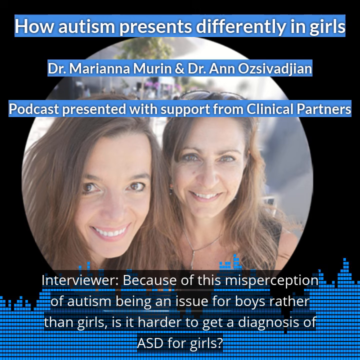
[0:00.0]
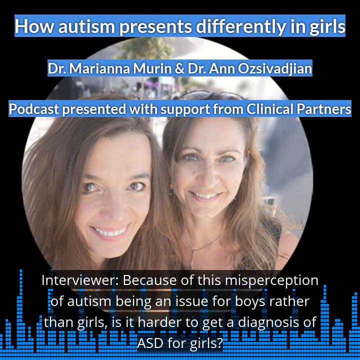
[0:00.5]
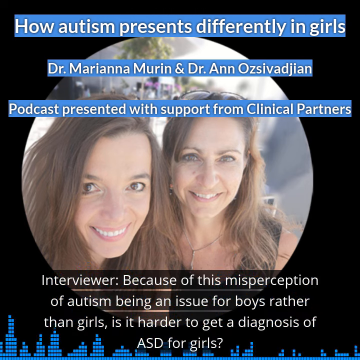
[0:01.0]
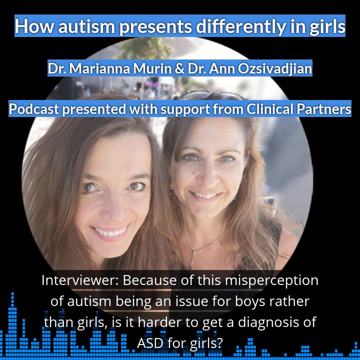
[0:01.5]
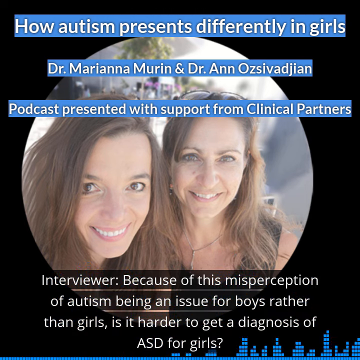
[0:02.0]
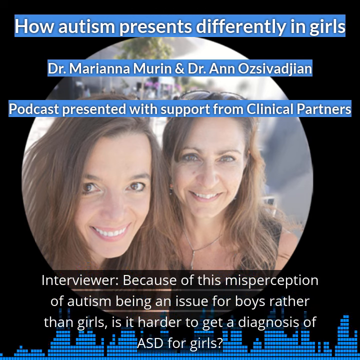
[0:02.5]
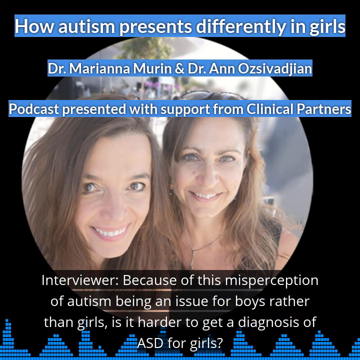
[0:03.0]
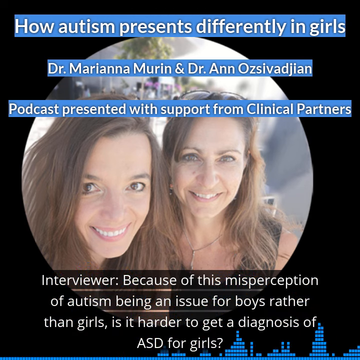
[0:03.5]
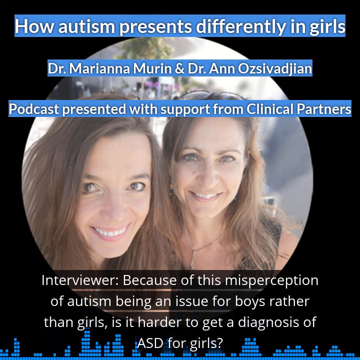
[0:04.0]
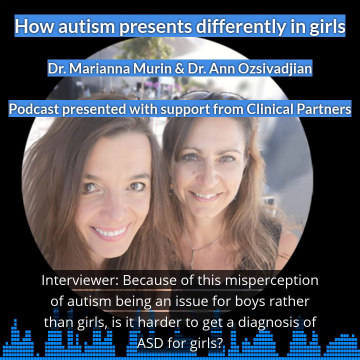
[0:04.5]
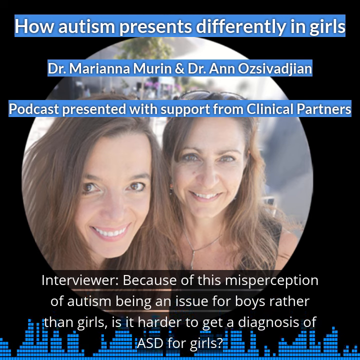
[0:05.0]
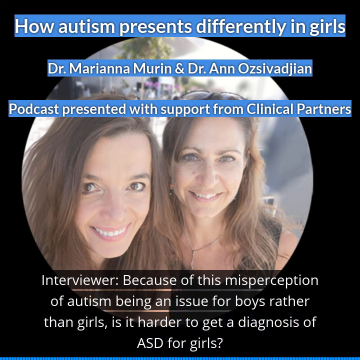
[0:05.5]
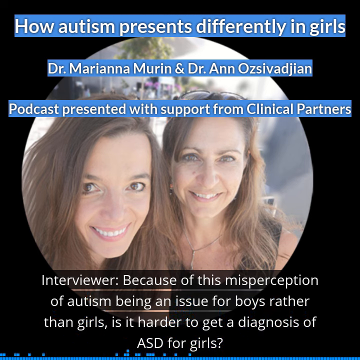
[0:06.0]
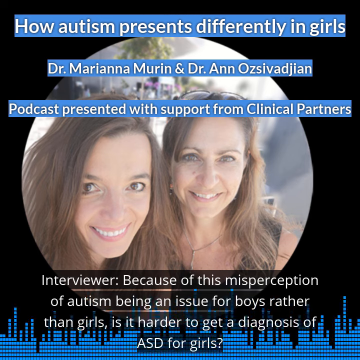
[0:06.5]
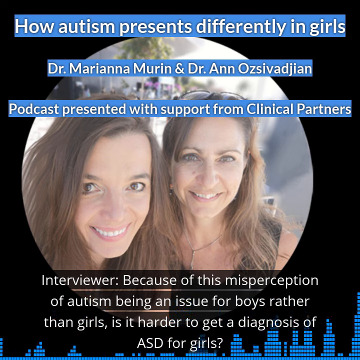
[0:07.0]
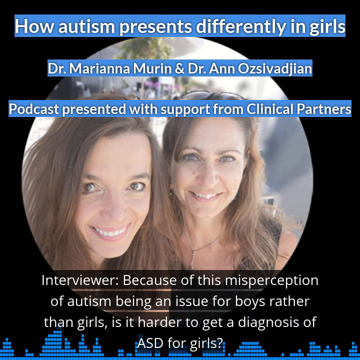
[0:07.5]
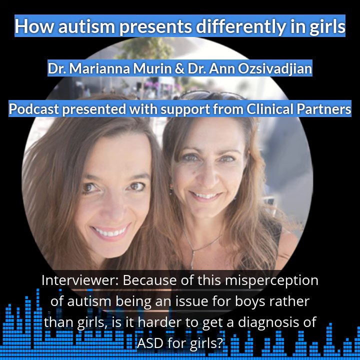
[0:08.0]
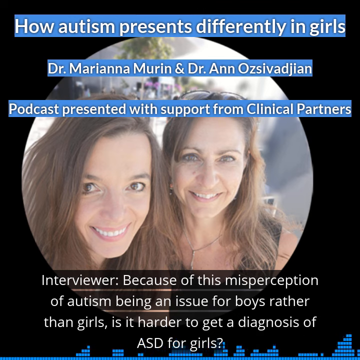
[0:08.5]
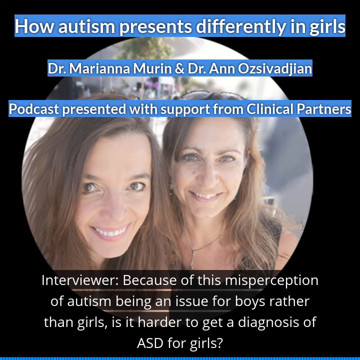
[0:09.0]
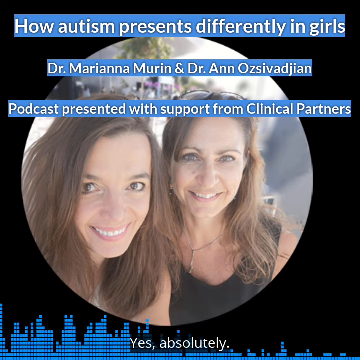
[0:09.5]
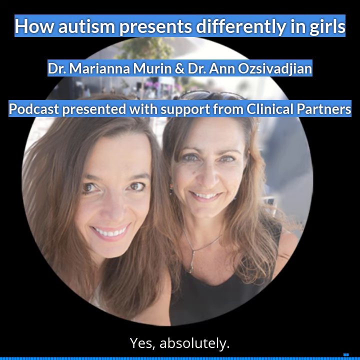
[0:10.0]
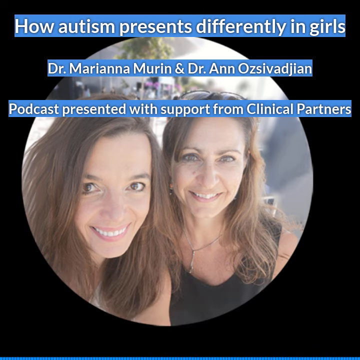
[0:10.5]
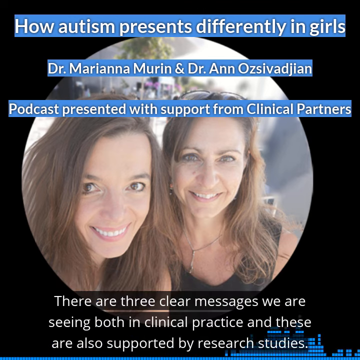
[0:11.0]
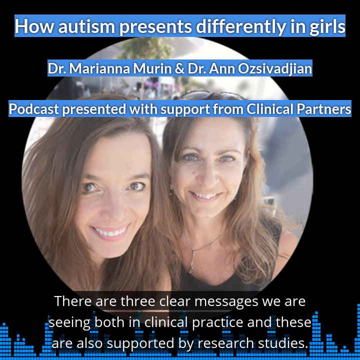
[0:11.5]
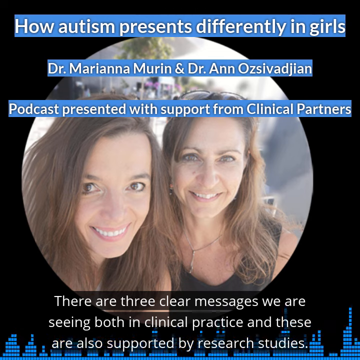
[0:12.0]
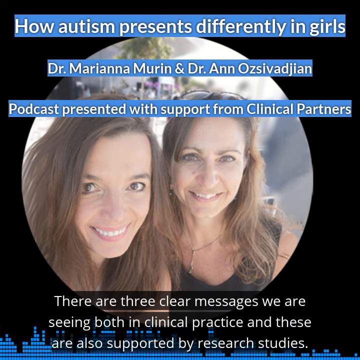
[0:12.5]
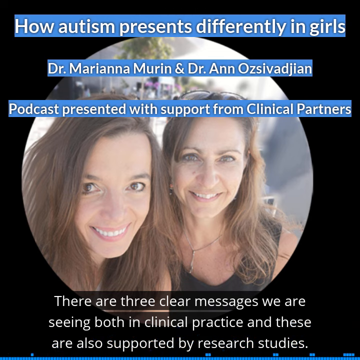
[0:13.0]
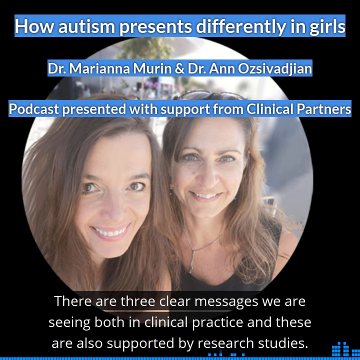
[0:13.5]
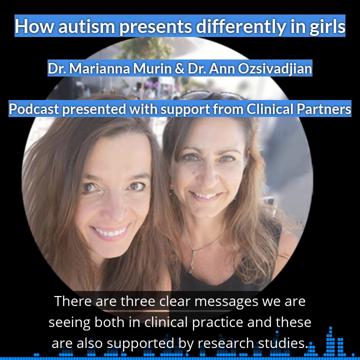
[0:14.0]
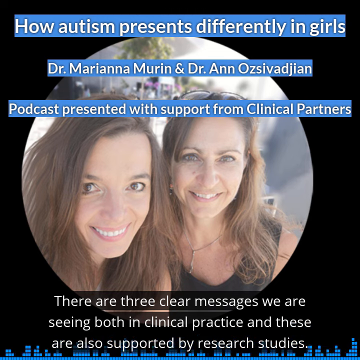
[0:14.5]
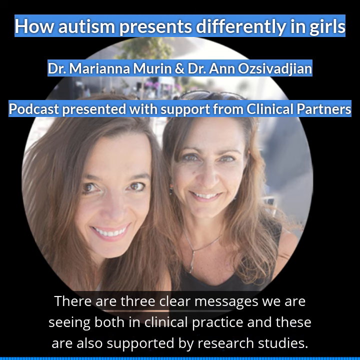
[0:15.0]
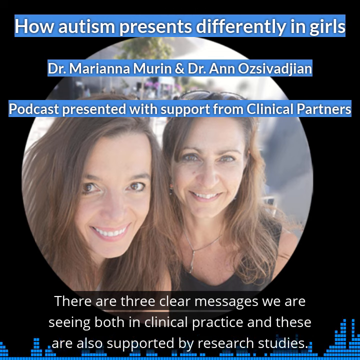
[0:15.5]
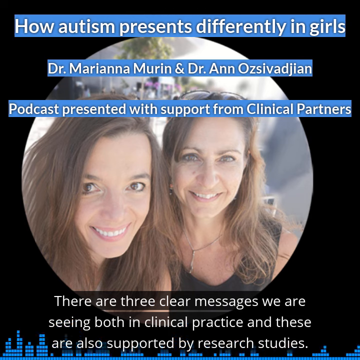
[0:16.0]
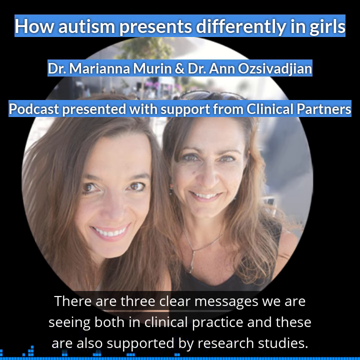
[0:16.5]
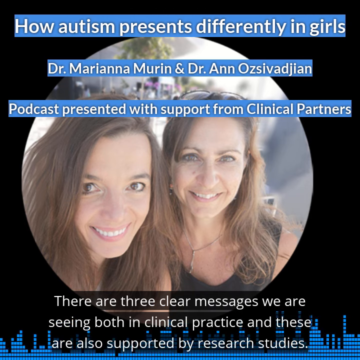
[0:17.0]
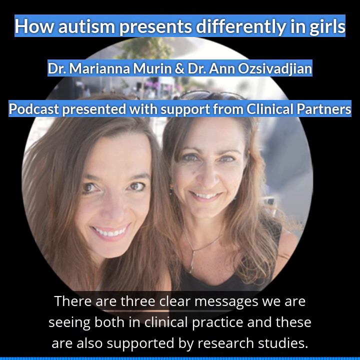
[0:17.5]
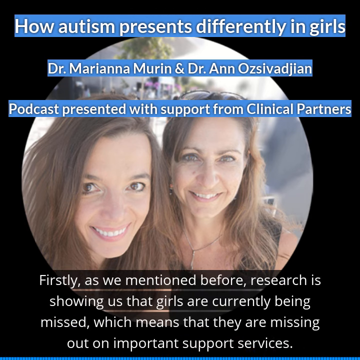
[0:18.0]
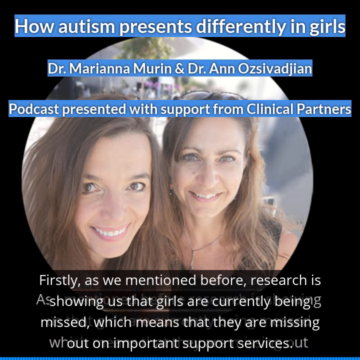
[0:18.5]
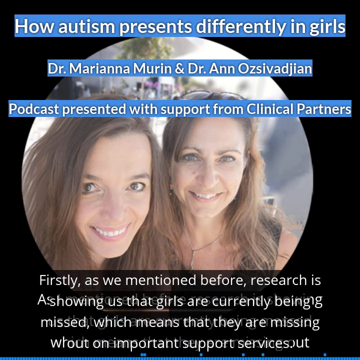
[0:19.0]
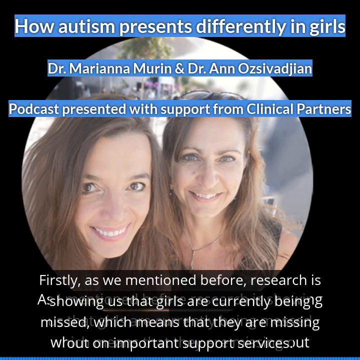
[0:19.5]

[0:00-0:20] A still image shows two women close up, one with glasses on her head; both have dark hair and light skin. They seem to be outside, as there is a tree in the background. The image is circular and set on a black background. Blue-highlighted information in white text reads "how autism presents differently in girls", followed by the names of two doctors, who are probably the women in the image, and notes that it is a podcast supported by clinical partners. Below the image of the two women are captions of what is being said in the podcast, in white text highlighted in black at the bottom of the screen, and they change as new information is spoken. Blue flashing lights at the bottom of the screen appear behind the captions, apparently showing voice tones or adding movement to the page. Only the two women appear in the image.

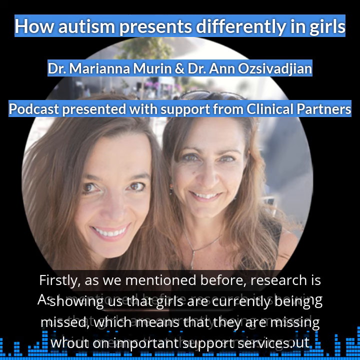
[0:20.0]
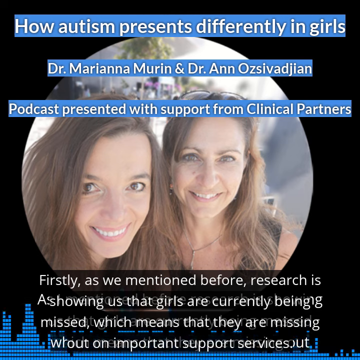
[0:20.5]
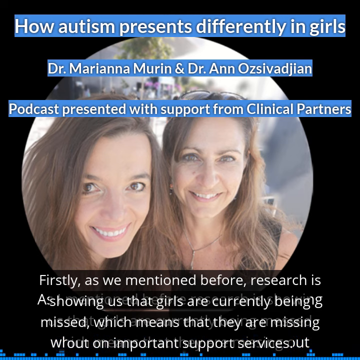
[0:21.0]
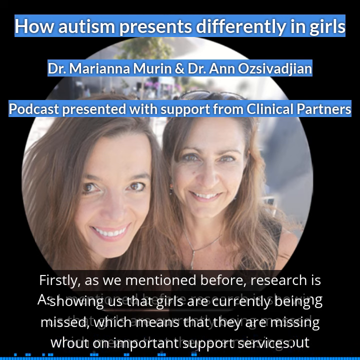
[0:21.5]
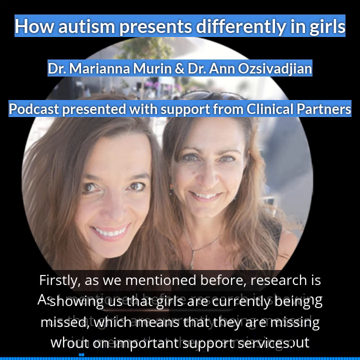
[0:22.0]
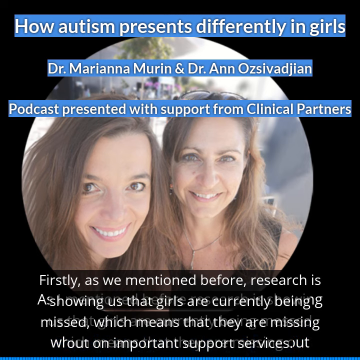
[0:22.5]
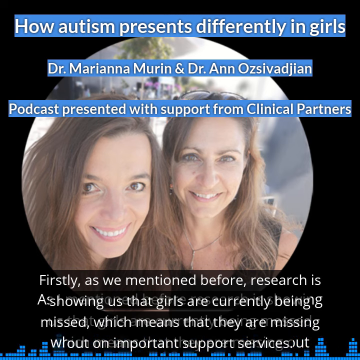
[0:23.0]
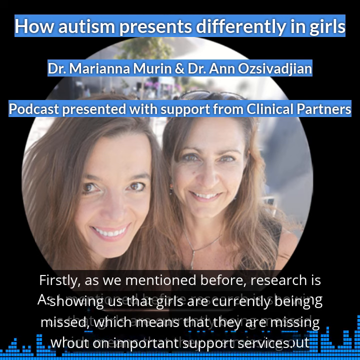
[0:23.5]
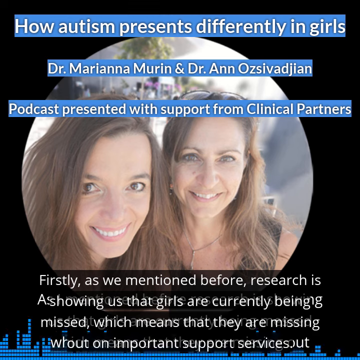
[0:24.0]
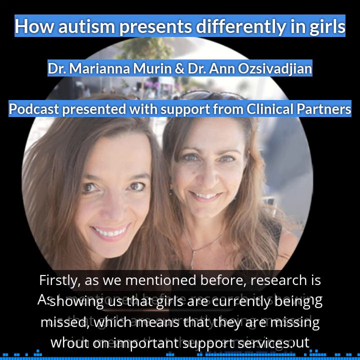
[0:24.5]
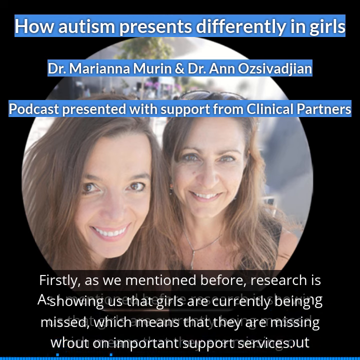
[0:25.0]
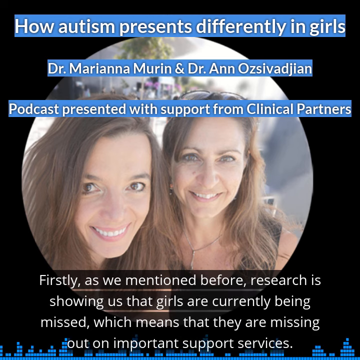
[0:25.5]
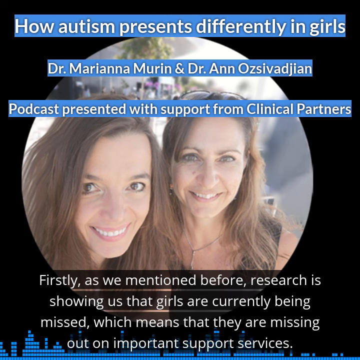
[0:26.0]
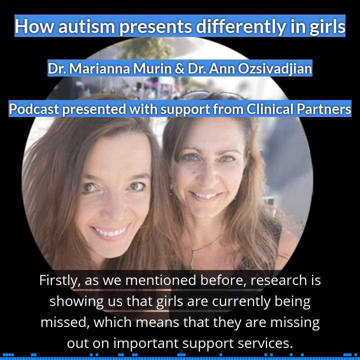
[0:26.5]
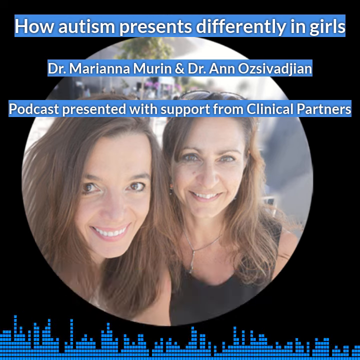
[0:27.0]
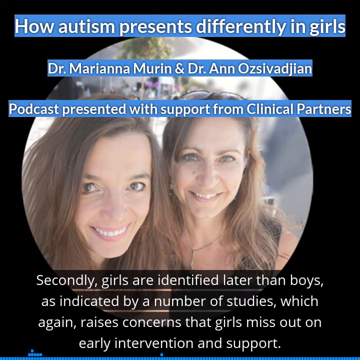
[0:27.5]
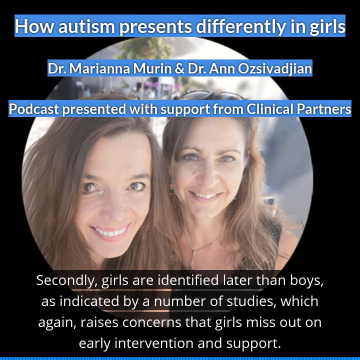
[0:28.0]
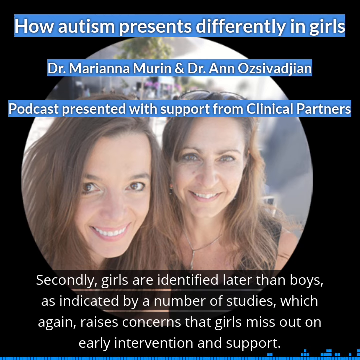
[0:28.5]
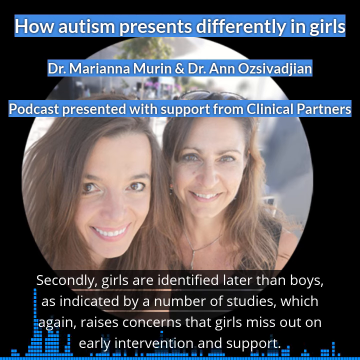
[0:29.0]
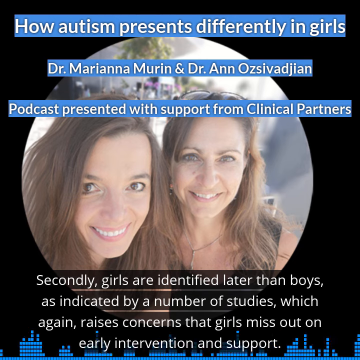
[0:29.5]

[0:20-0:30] The still podcast image continues: a circular image of two women with dark hair and fair skin, outside, on a black background. Blue-highlighted information in white text gives the title, the names of the doctors, and that this is a podcast supported by clinical partners. At the bottom of the screen are captions of what is being said in the podcast, with blue flashing lights behind them. The captions state that girls are being missed when they are diagnosed for autism, and that research shows girls are not getting the same mention or attention as boys on this topic.